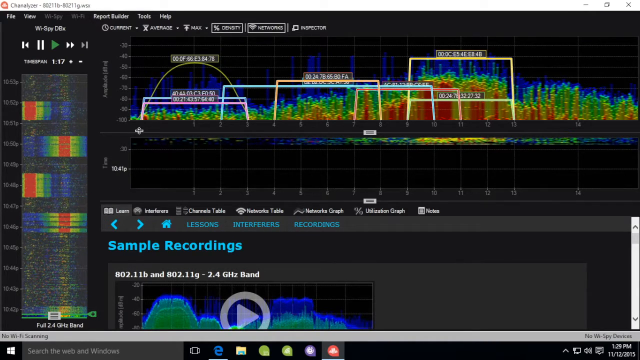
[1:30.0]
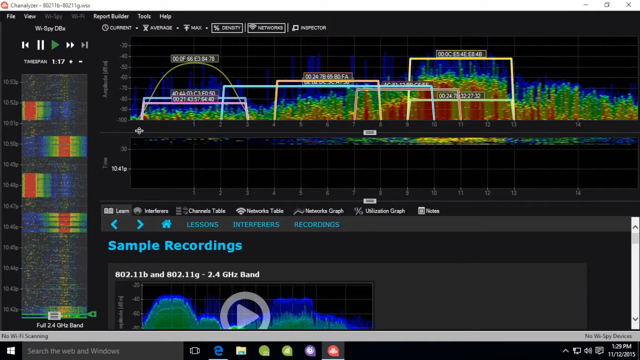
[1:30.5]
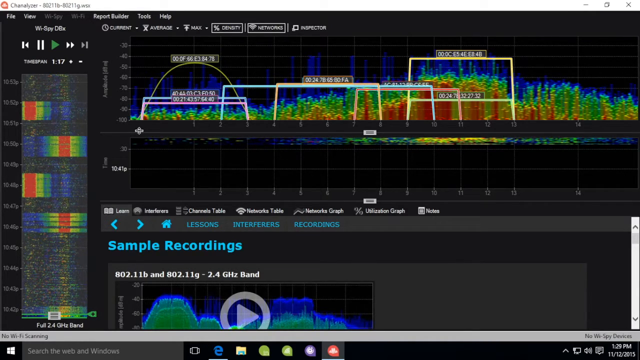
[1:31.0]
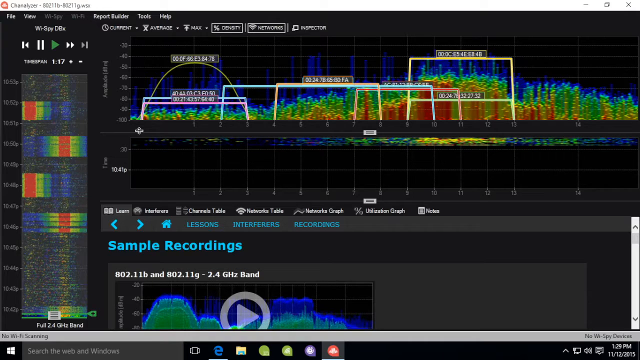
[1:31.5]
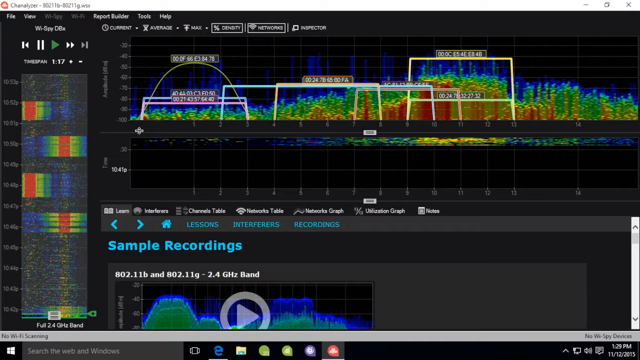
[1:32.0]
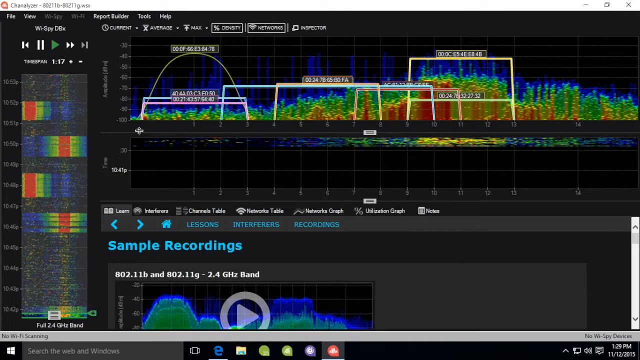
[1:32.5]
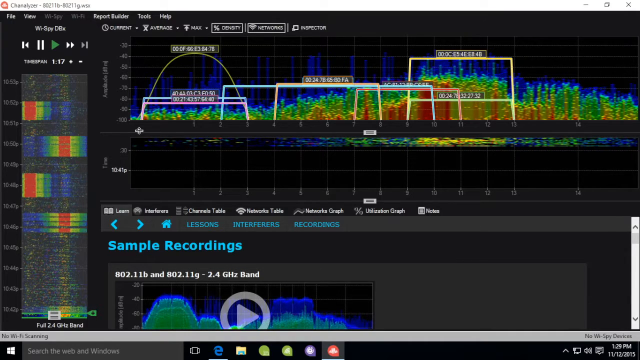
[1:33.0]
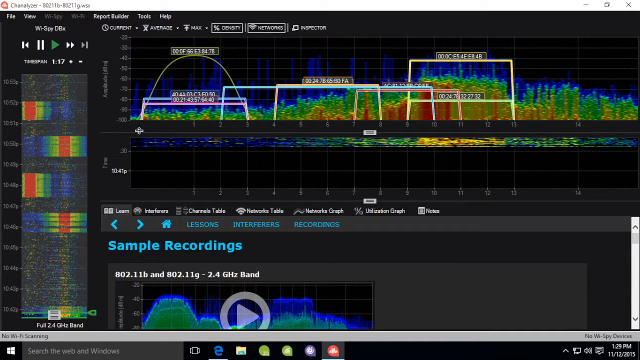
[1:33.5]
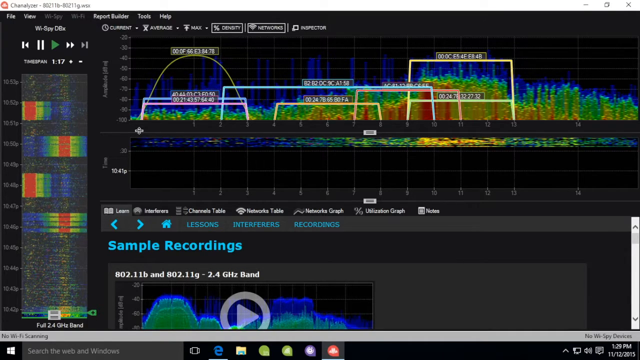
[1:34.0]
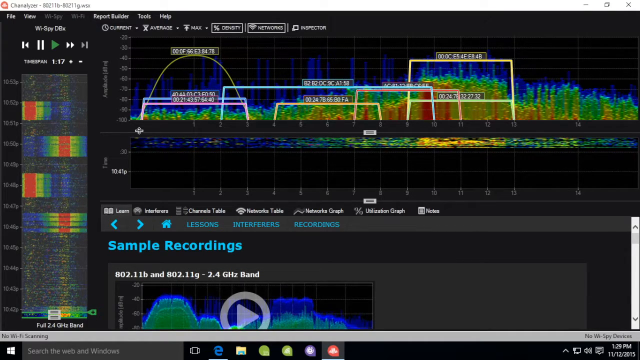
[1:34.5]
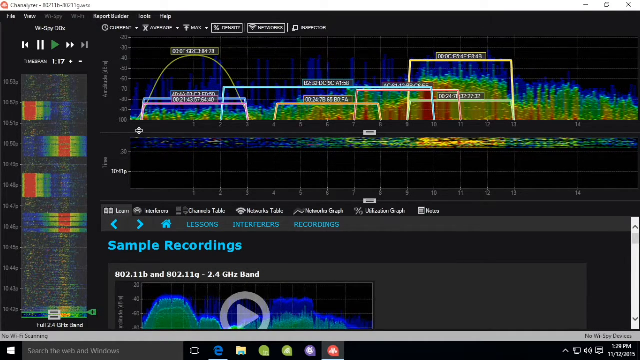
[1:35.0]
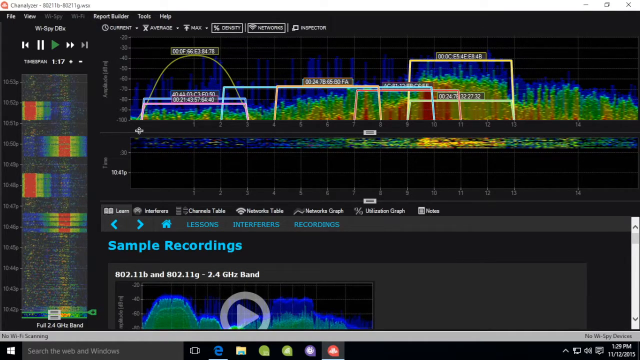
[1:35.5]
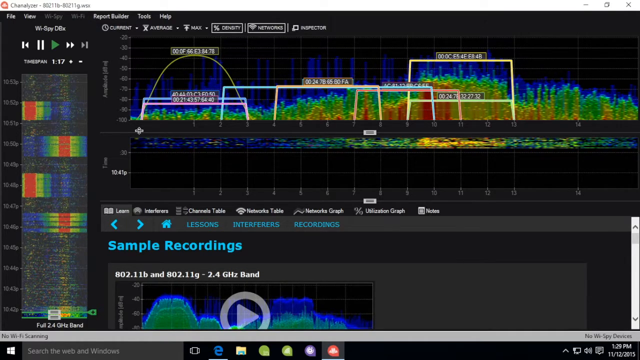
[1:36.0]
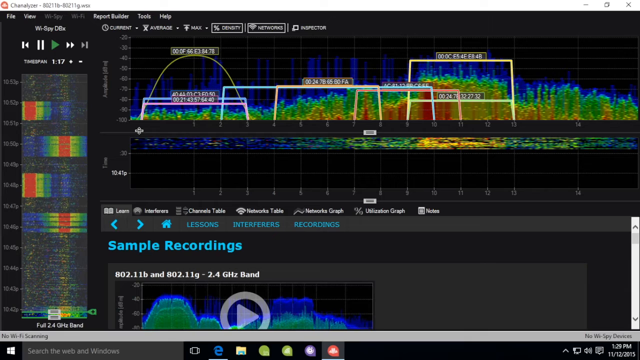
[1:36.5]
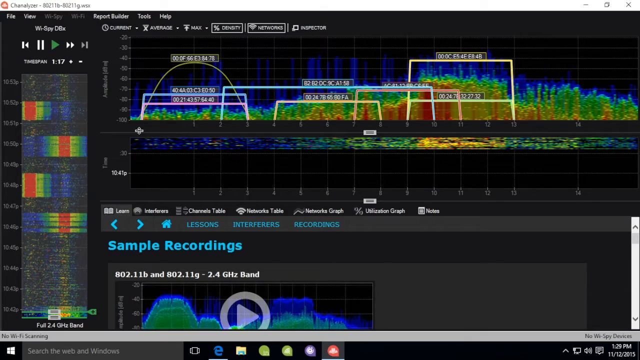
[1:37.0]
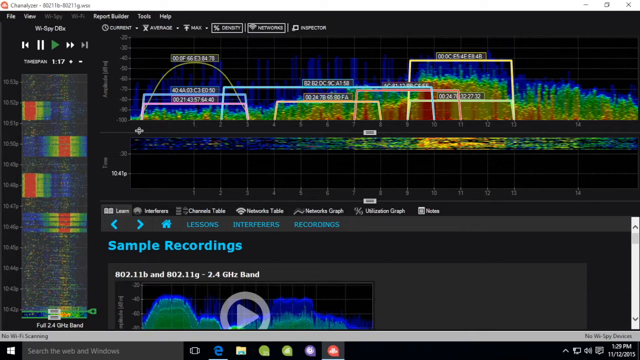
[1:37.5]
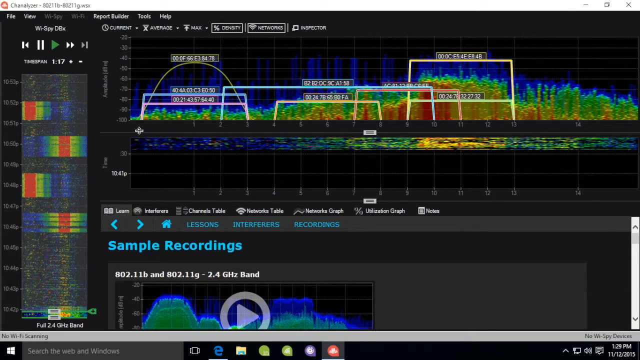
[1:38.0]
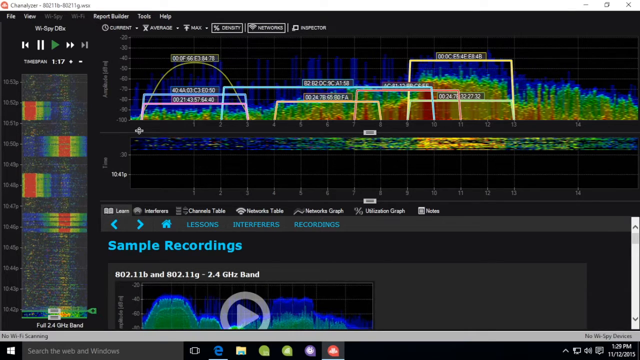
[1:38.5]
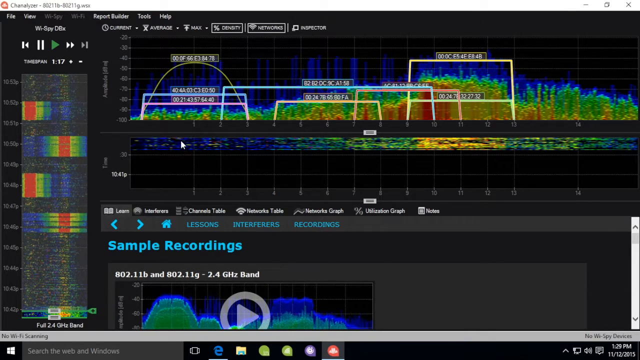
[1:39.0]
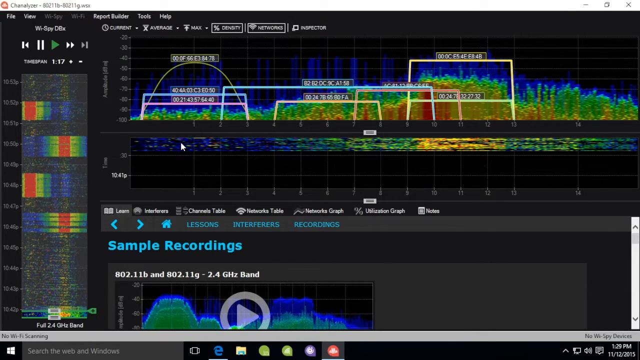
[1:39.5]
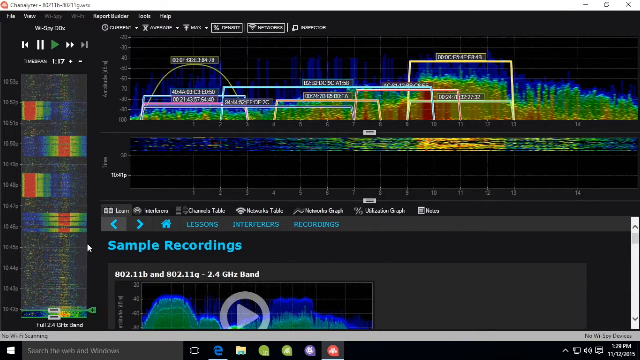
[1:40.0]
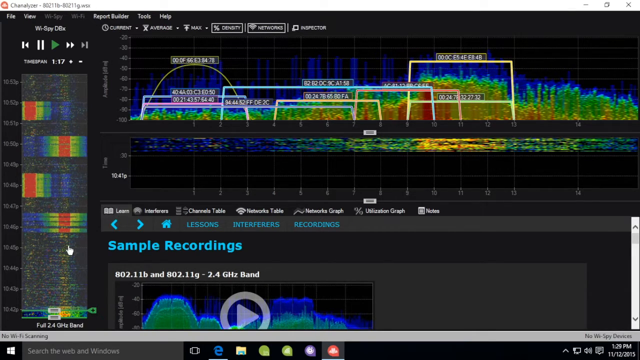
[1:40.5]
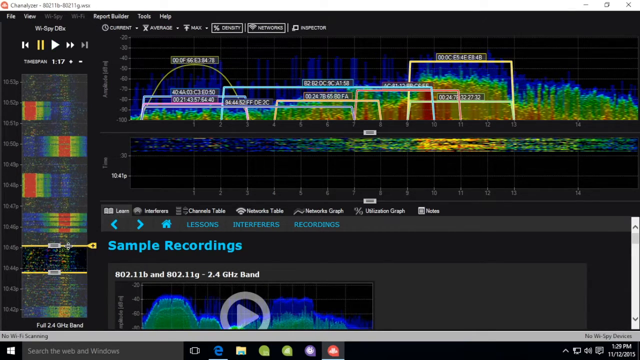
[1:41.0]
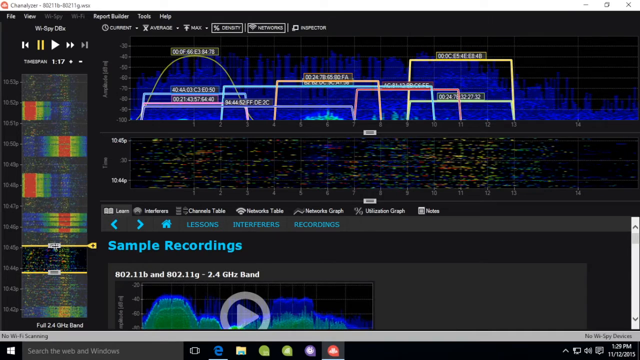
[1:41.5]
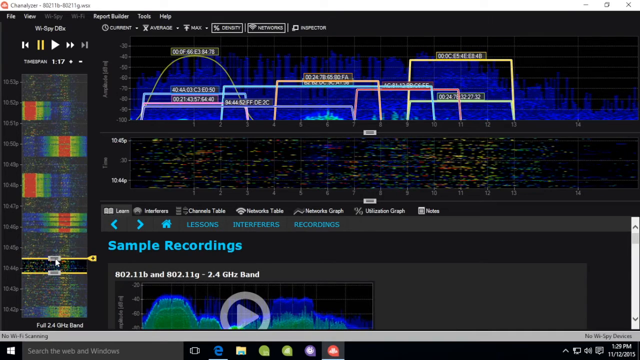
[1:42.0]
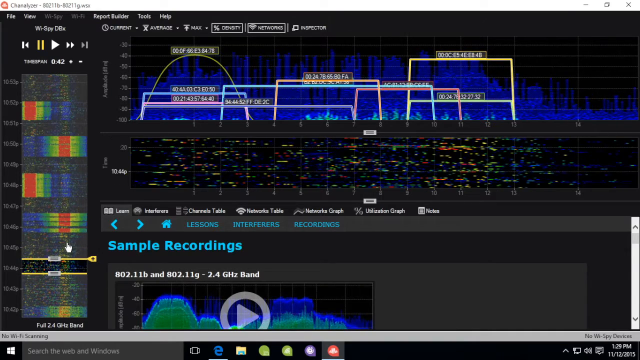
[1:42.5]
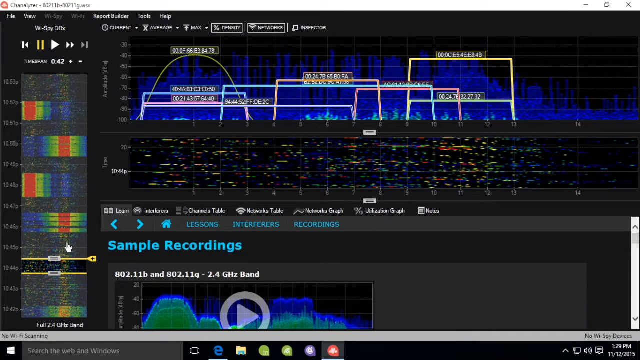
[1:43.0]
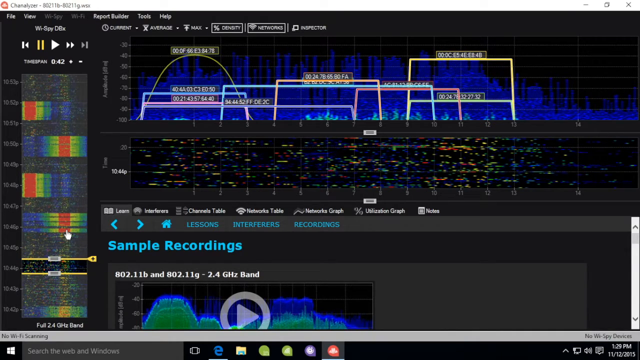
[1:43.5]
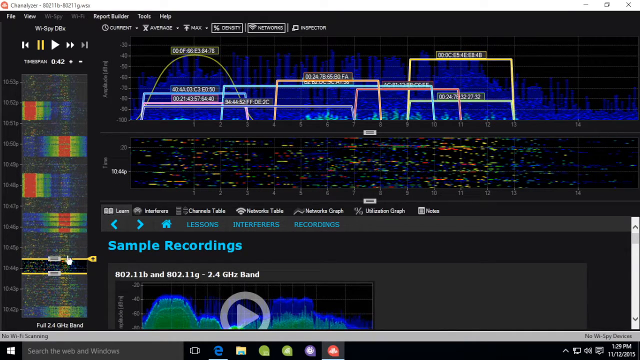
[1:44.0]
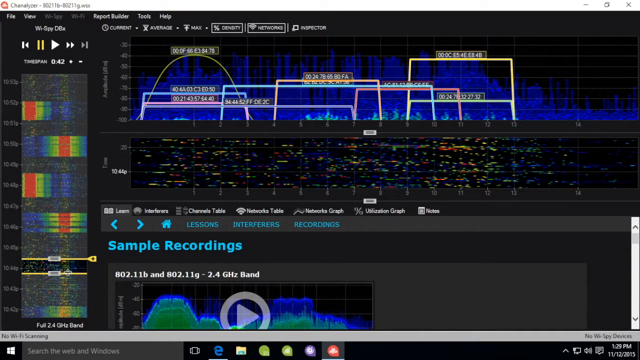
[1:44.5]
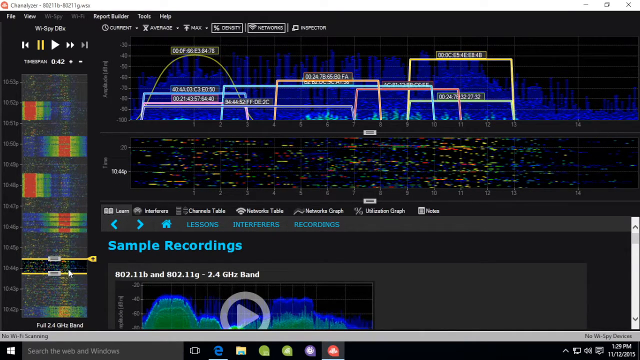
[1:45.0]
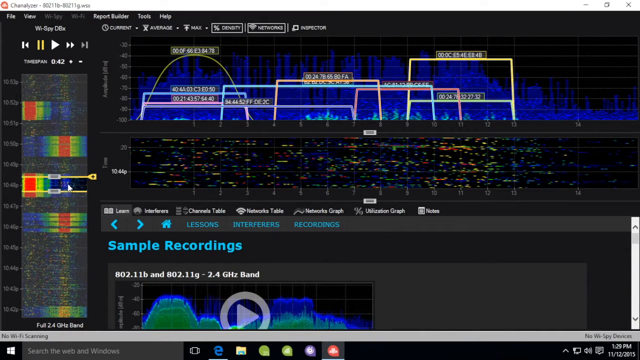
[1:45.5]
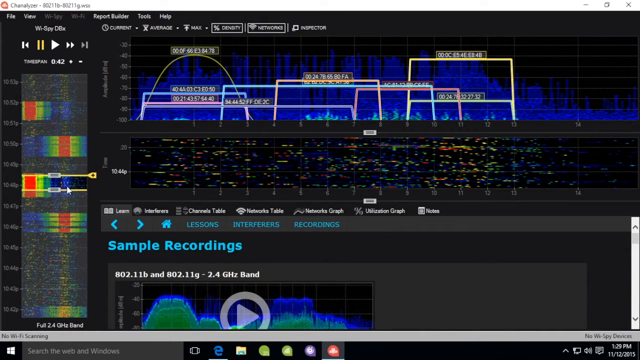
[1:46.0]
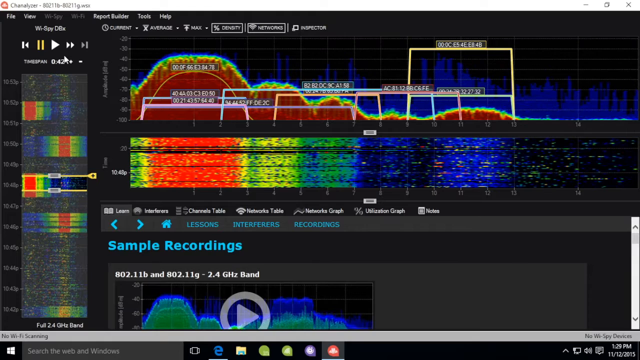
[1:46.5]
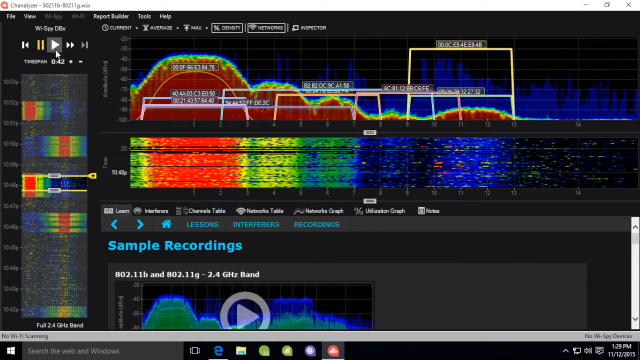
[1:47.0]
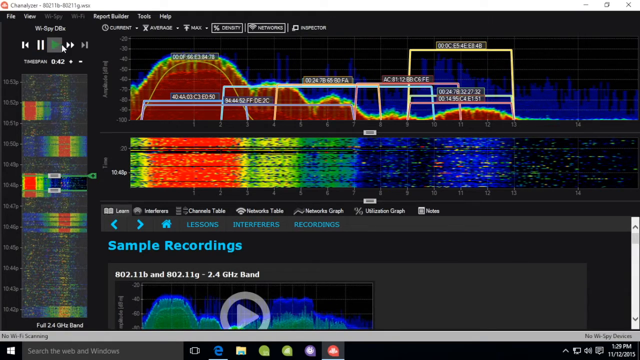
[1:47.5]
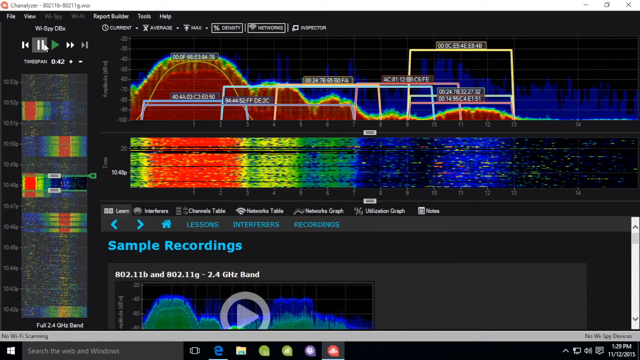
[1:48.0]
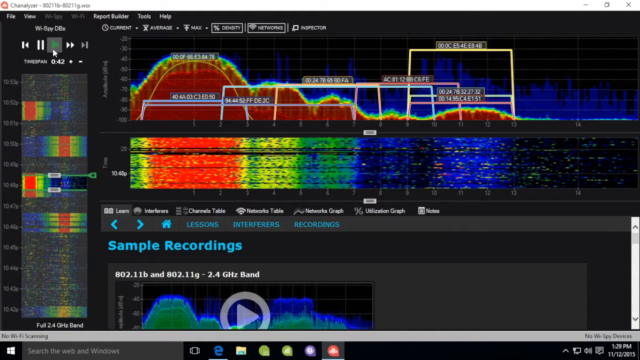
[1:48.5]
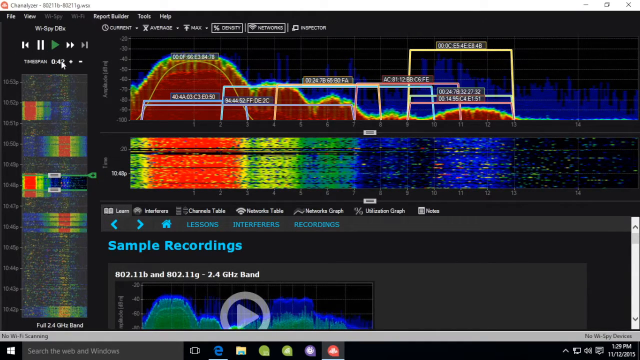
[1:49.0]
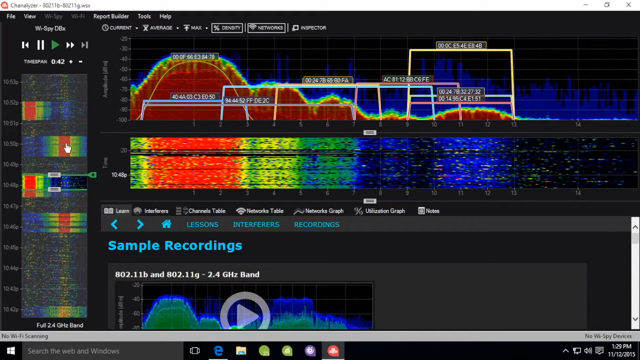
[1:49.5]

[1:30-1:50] The screen shows the decibel level, or gain level, of the various channels, along with background noise and other interference across the bands and channels. There are many graphs in colors ranging from red to blue, with green and yellow in between, representing the outside interference or levels of dB gain.